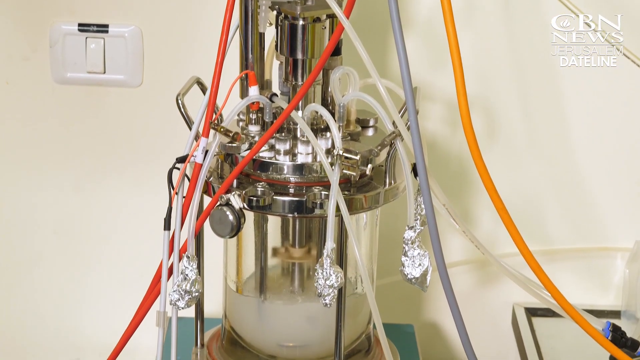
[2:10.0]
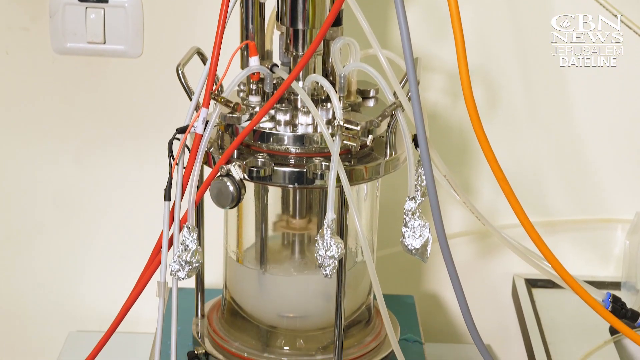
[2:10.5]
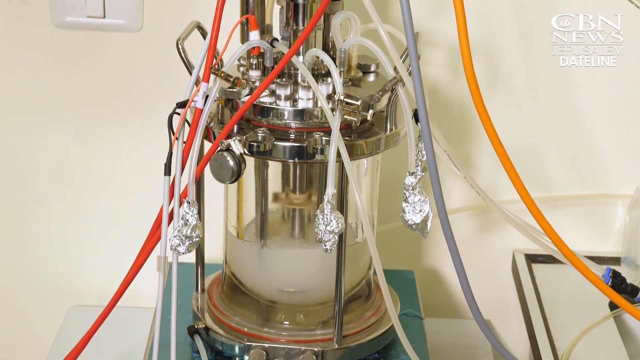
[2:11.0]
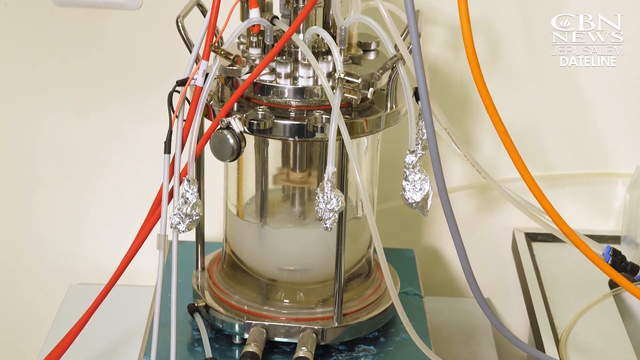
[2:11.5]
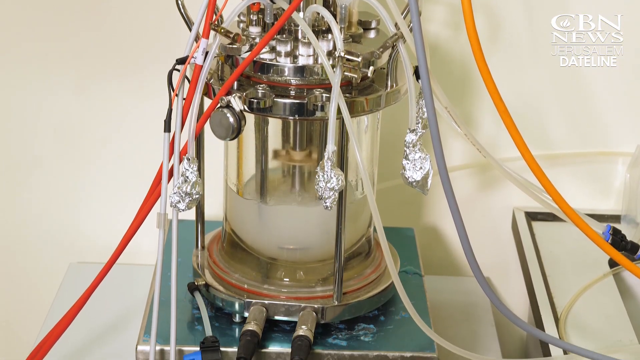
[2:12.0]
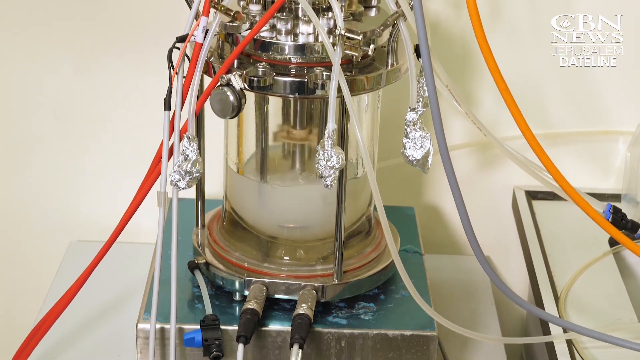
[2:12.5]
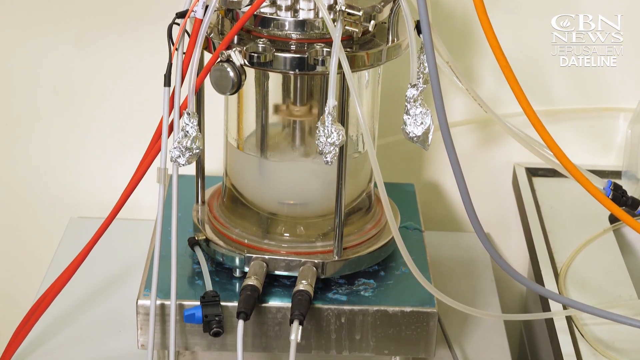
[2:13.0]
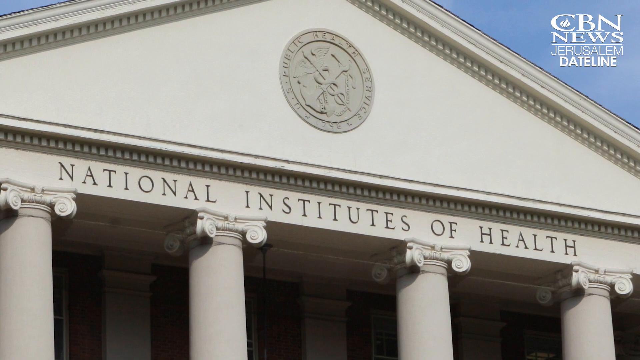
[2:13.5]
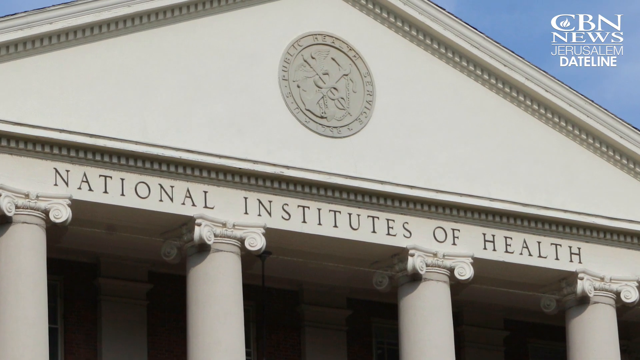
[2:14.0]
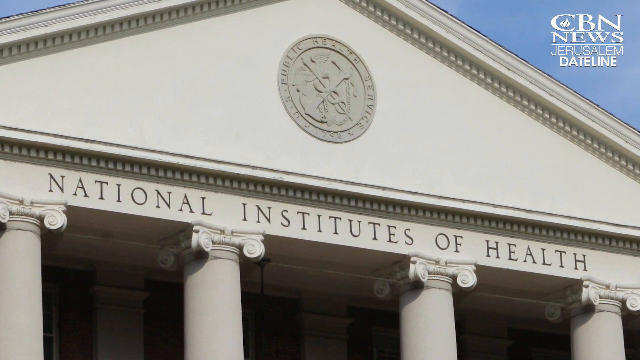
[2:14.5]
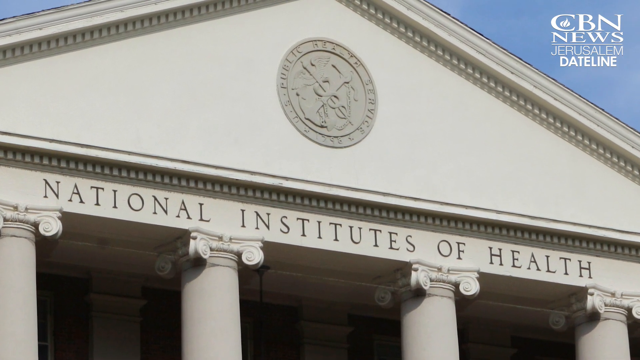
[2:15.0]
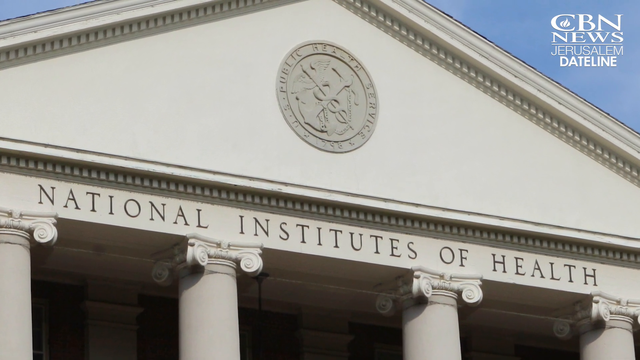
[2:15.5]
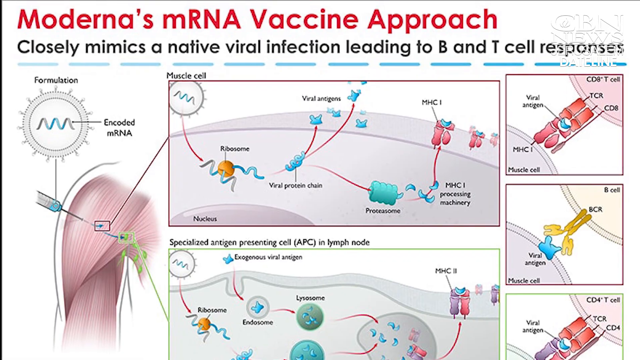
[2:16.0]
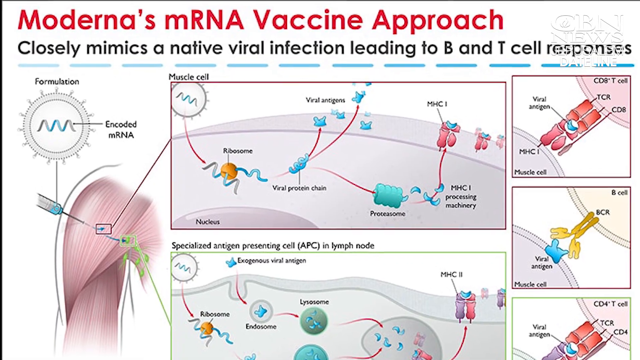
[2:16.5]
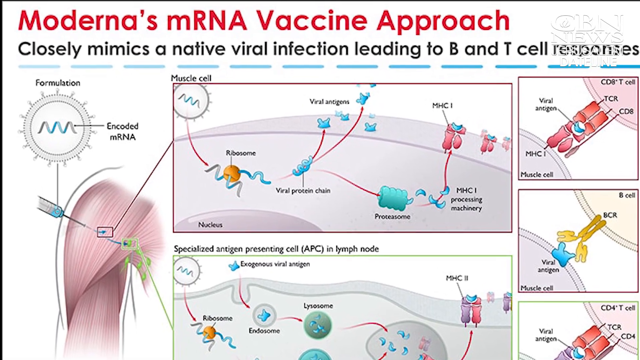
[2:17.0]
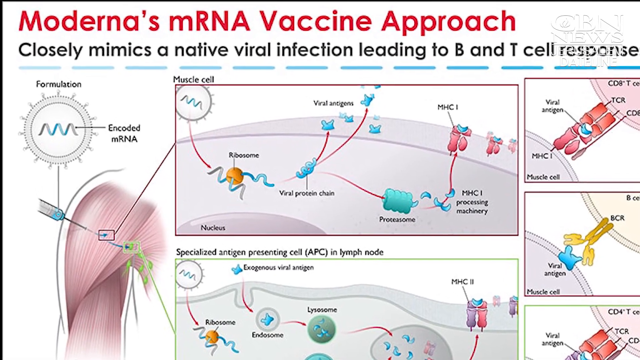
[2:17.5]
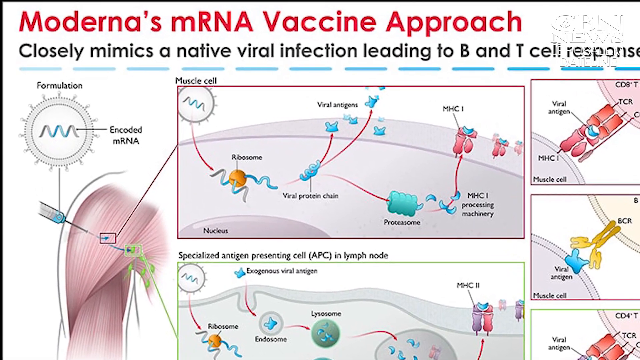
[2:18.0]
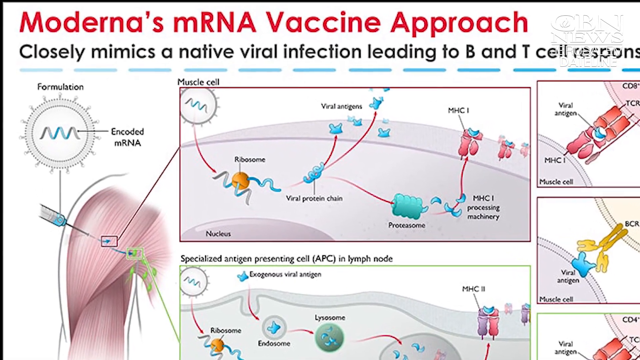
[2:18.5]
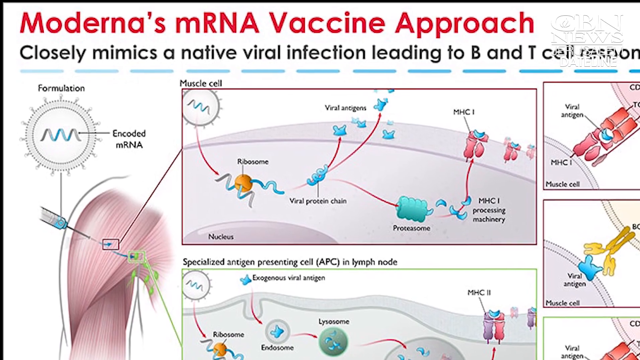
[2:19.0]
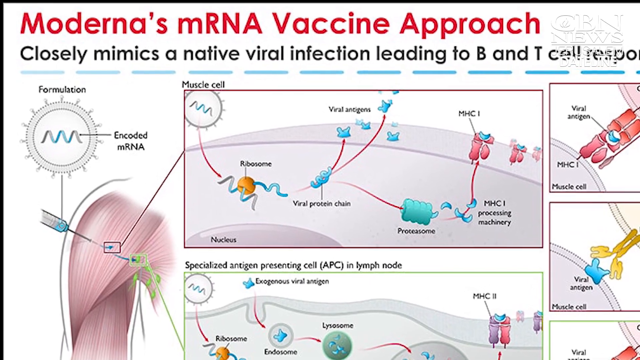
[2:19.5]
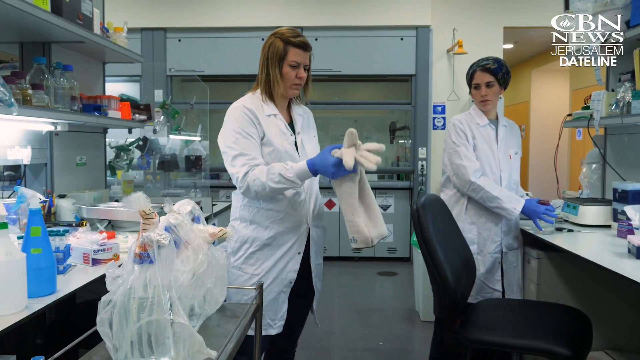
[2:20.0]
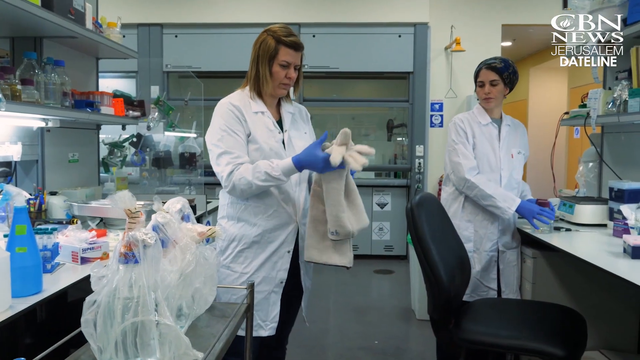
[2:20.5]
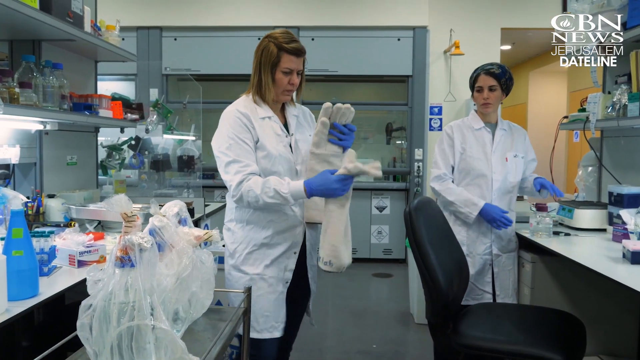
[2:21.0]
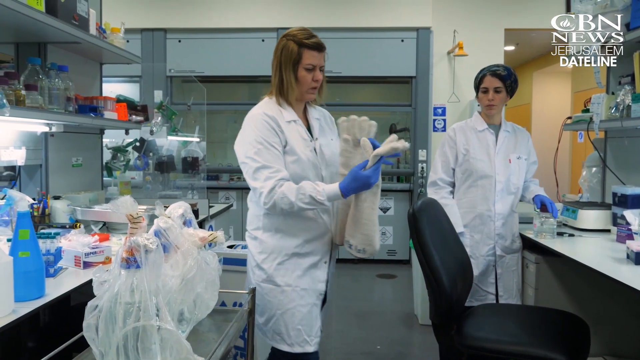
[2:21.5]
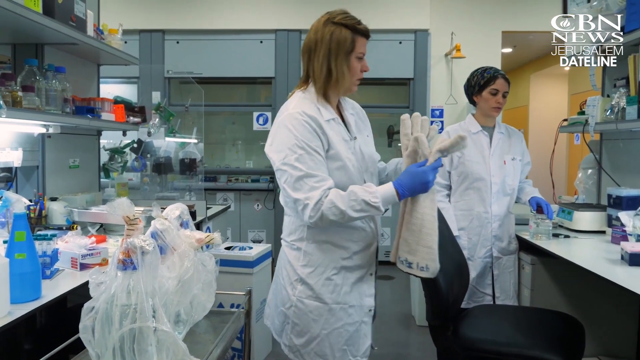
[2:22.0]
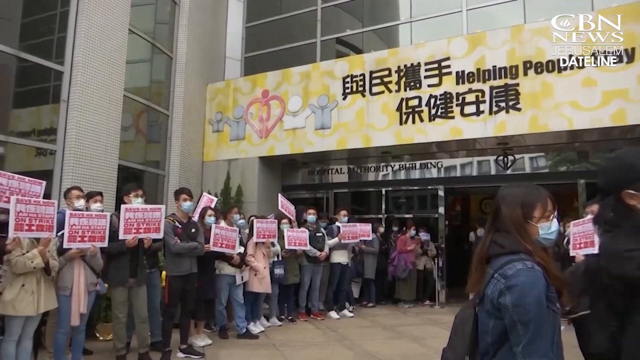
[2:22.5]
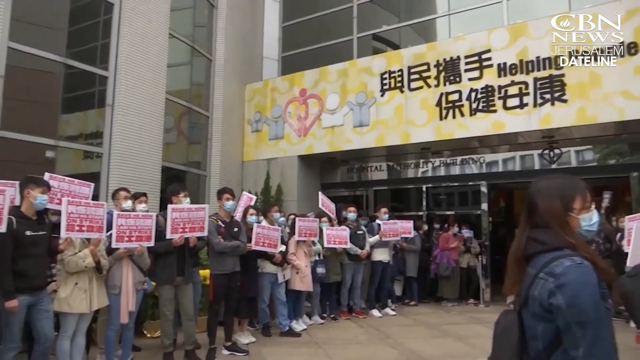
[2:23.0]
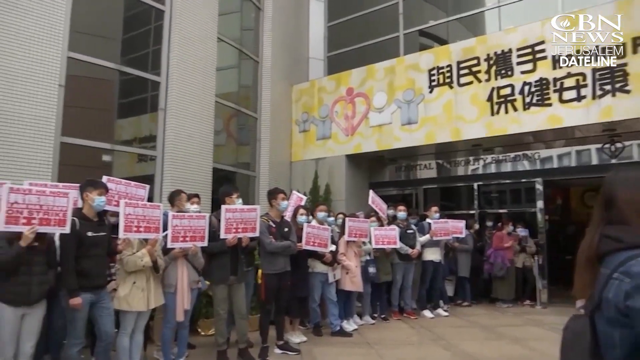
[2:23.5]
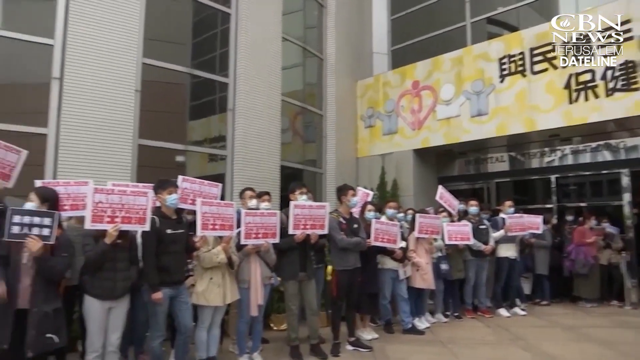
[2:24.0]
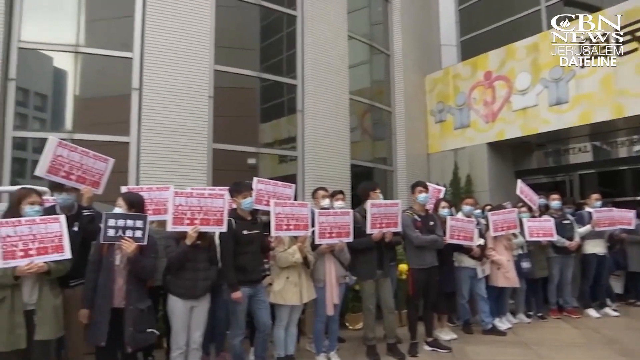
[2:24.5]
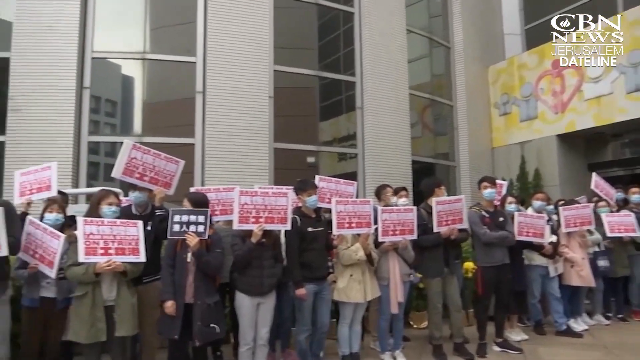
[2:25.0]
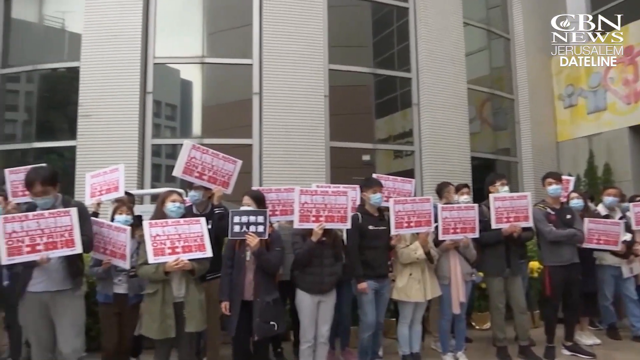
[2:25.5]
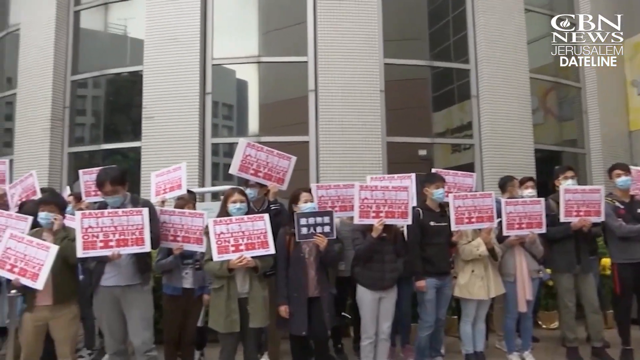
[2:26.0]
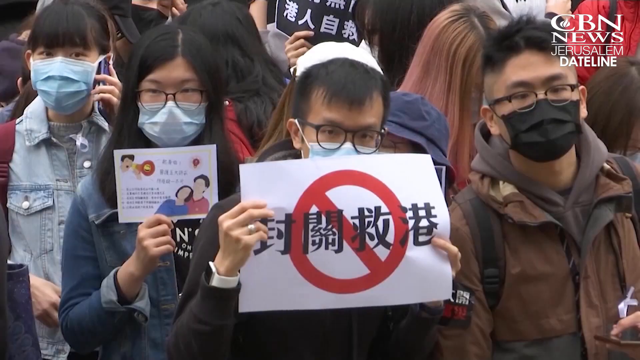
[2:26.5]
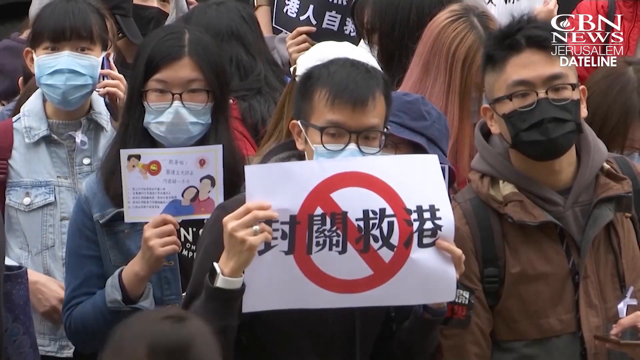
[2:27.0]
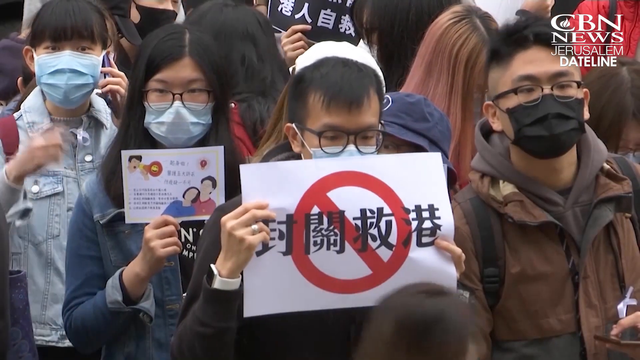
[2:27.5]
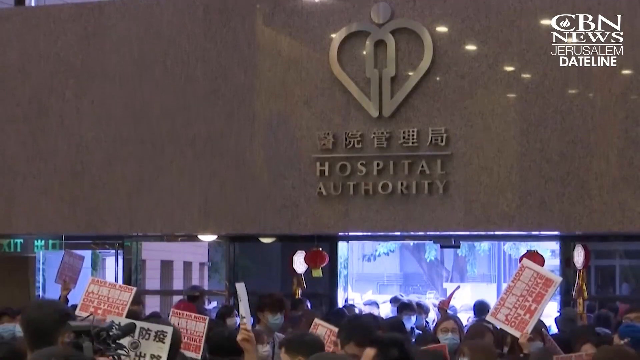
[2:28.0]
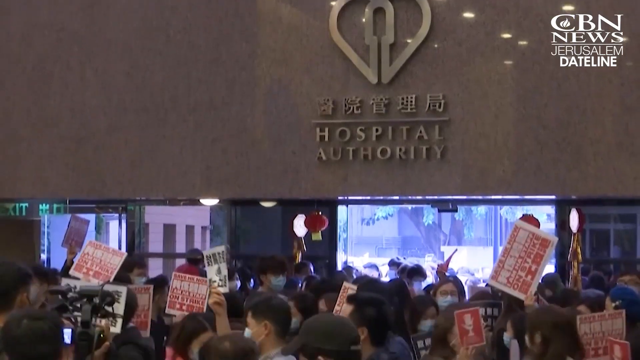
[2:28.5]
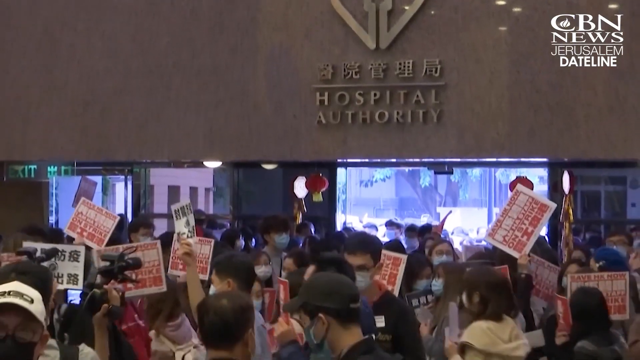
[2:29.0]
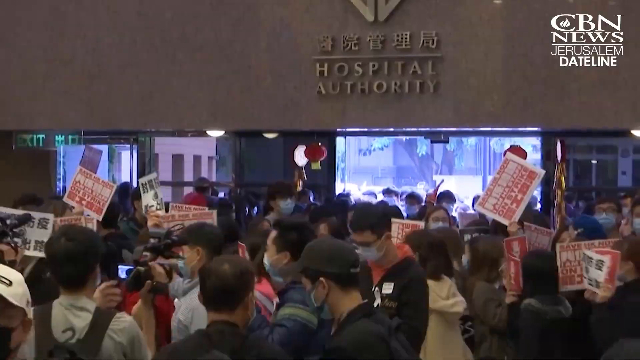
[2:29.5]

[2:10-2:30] A closer view shows the column-shaped machine seen earlier. Besides red and orange wires, there are also clear ones and a single gray one coming out of it. In the middle, a thick white fluid churns and twists around, almost like a blender, at the bottom. Then a picture of the National Institutes of Health is shown while being zoomed in, followed by another picture being zoomed in, this one about Moderna's mRNA vaccine approach. The video cuts to scientists working in the lab who look like they are about to put on really thick, big-looking gloves. It then cuts to a sort of line outside, or some sort of protest.